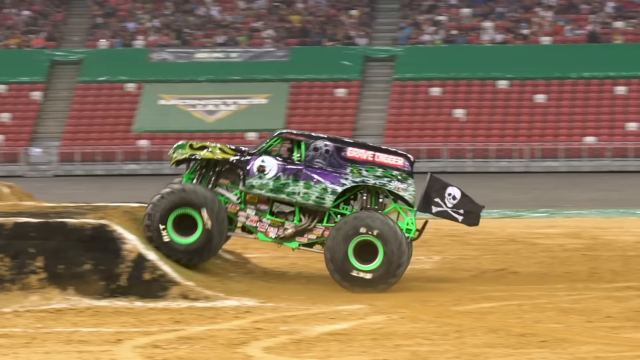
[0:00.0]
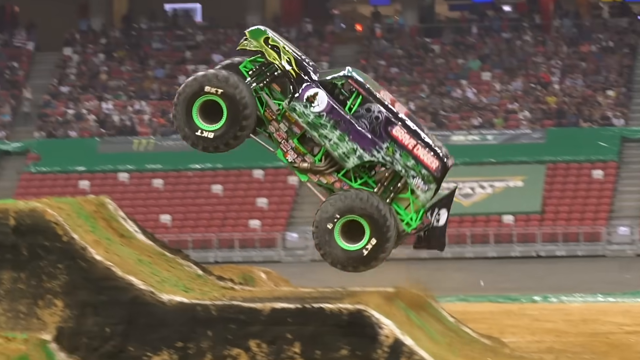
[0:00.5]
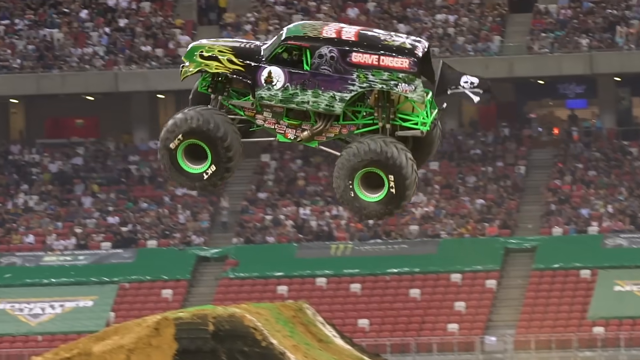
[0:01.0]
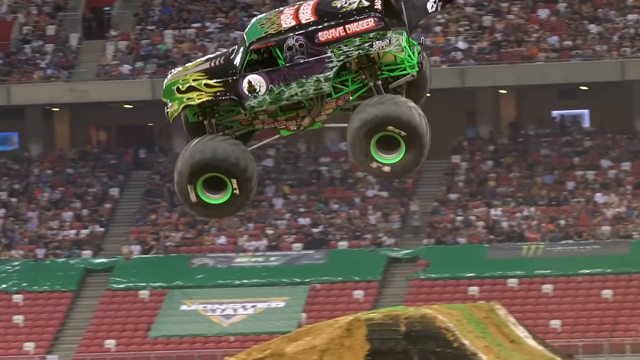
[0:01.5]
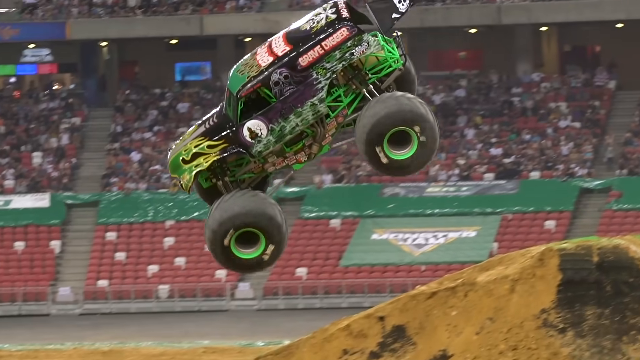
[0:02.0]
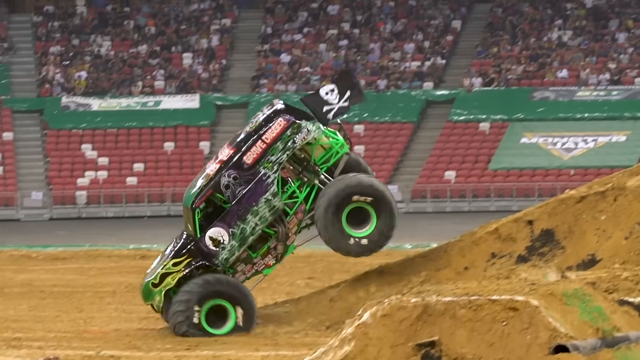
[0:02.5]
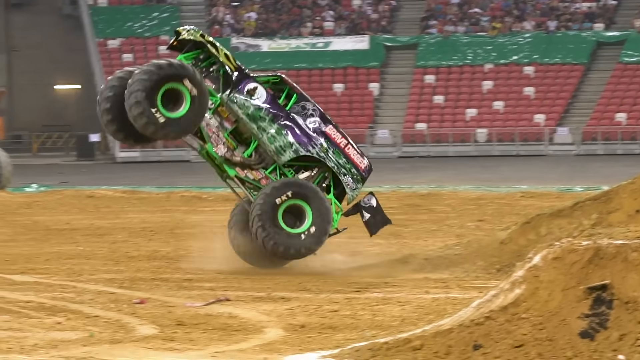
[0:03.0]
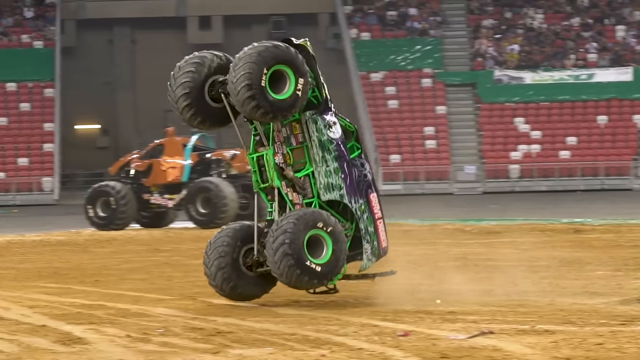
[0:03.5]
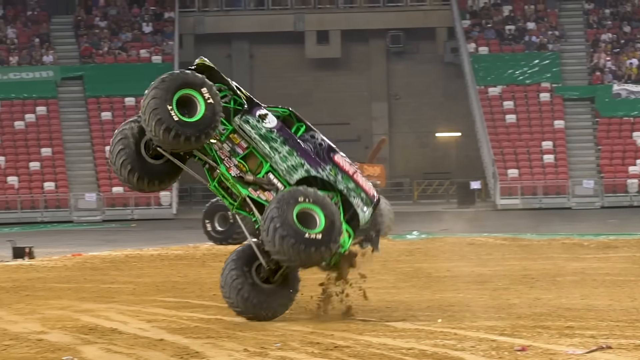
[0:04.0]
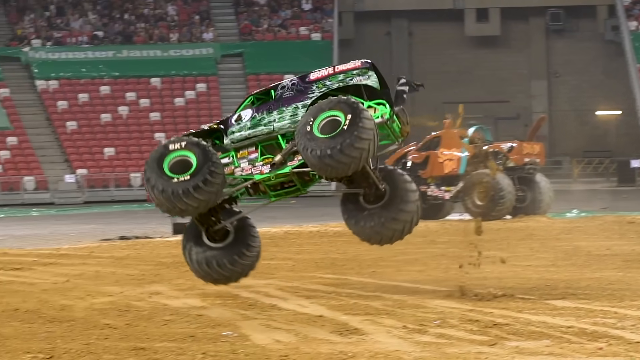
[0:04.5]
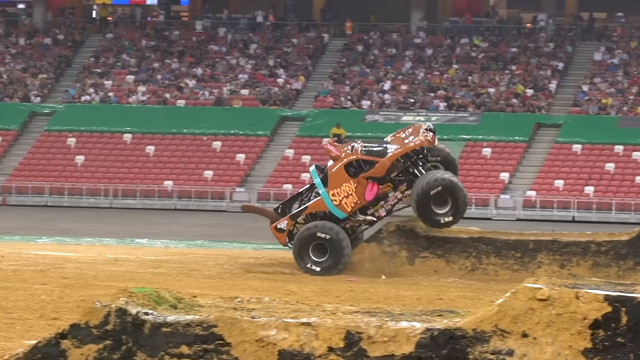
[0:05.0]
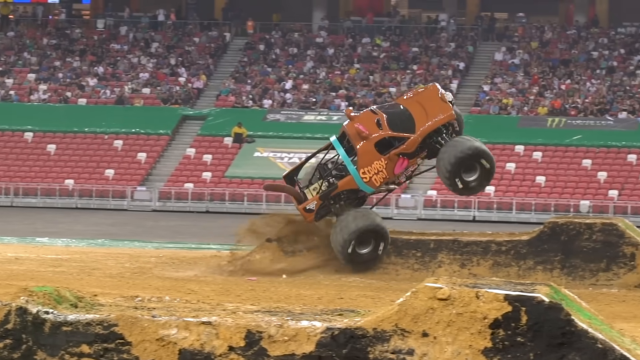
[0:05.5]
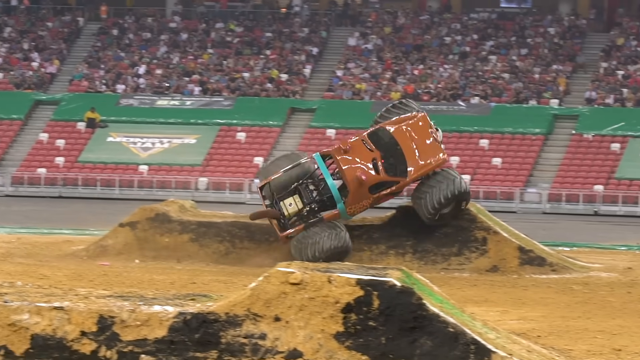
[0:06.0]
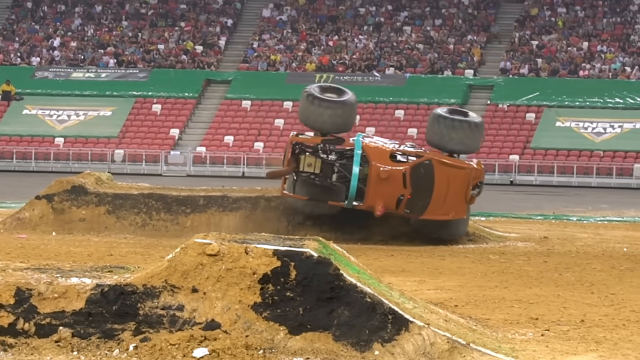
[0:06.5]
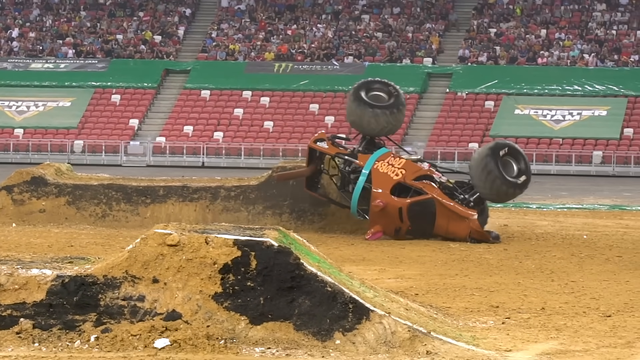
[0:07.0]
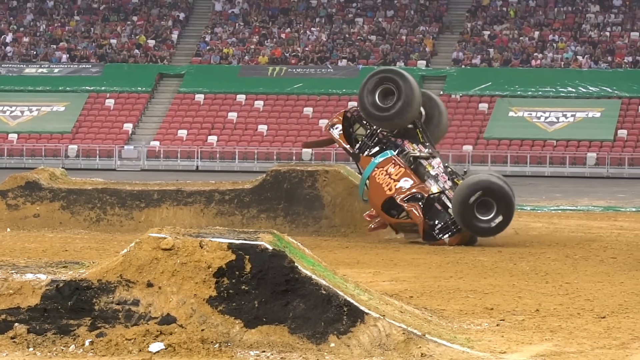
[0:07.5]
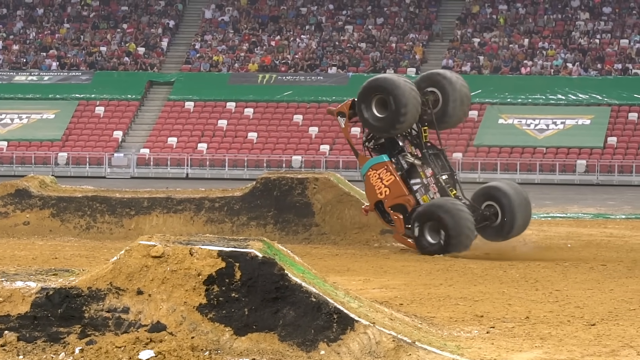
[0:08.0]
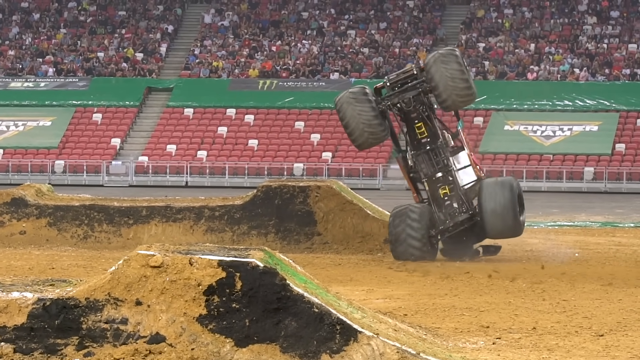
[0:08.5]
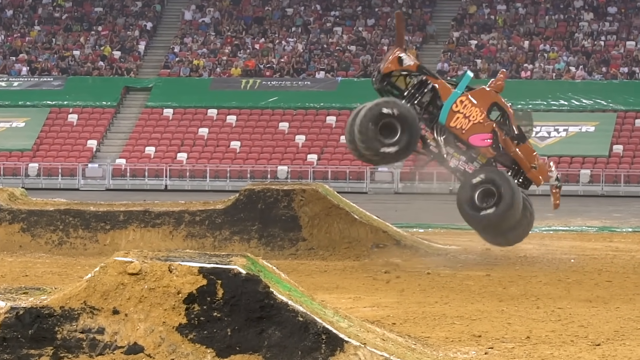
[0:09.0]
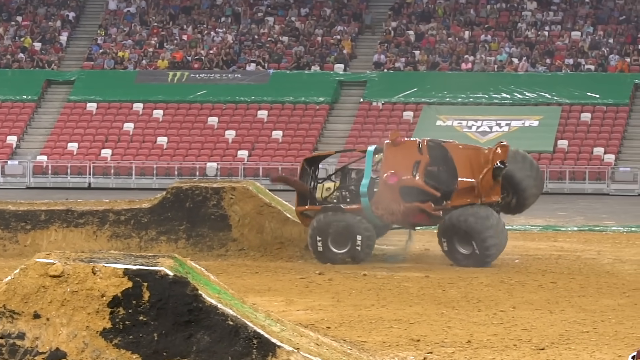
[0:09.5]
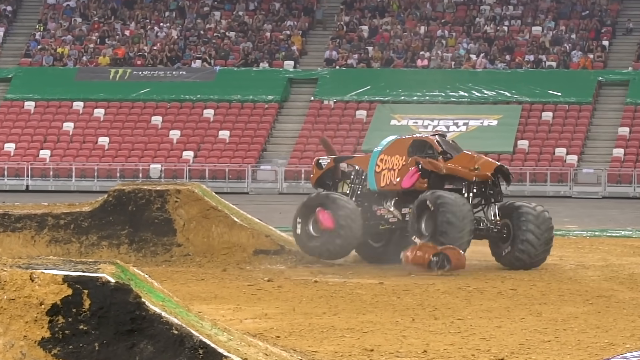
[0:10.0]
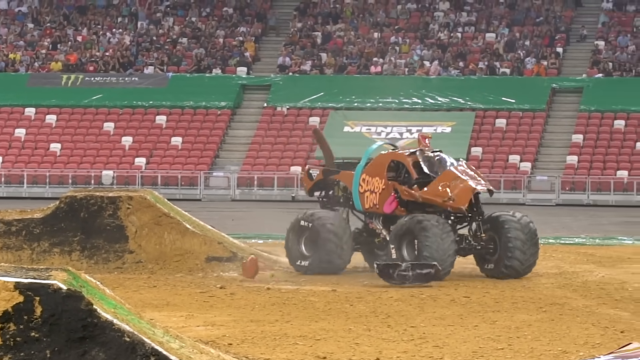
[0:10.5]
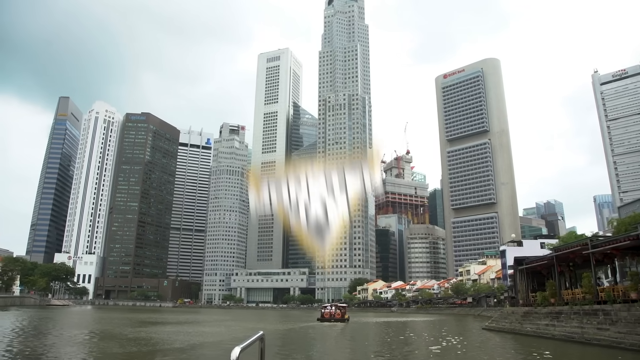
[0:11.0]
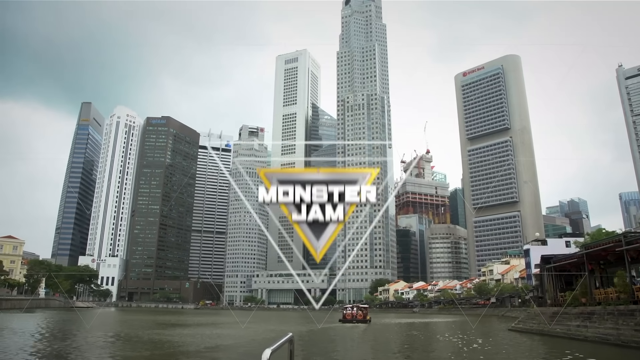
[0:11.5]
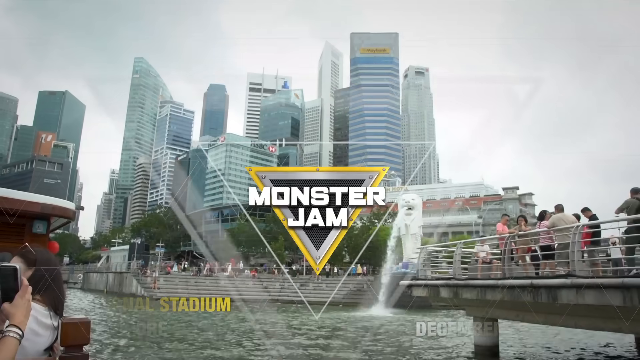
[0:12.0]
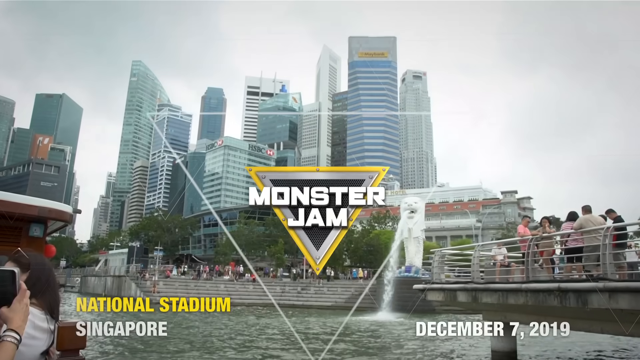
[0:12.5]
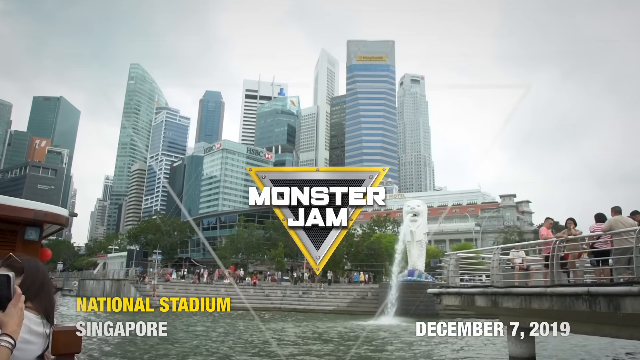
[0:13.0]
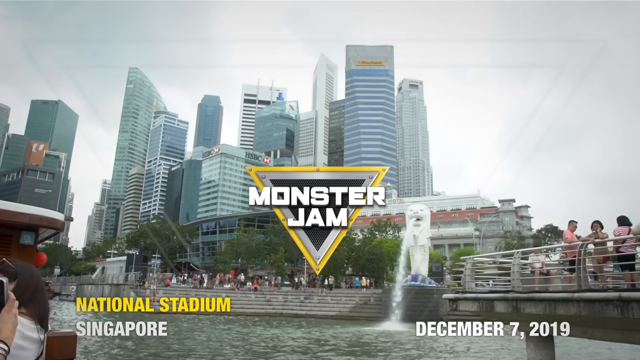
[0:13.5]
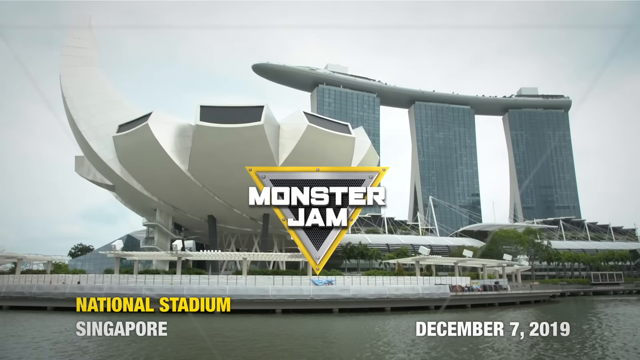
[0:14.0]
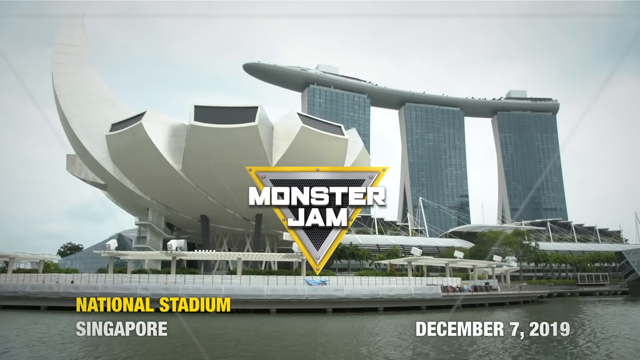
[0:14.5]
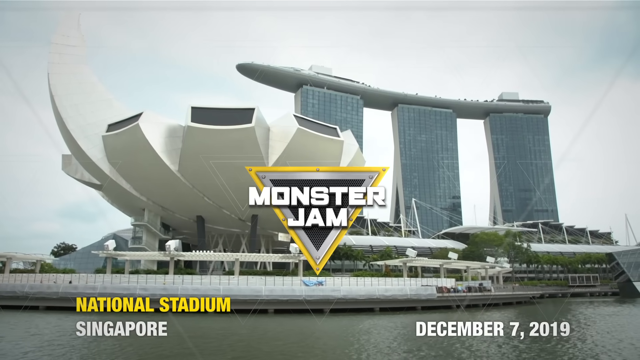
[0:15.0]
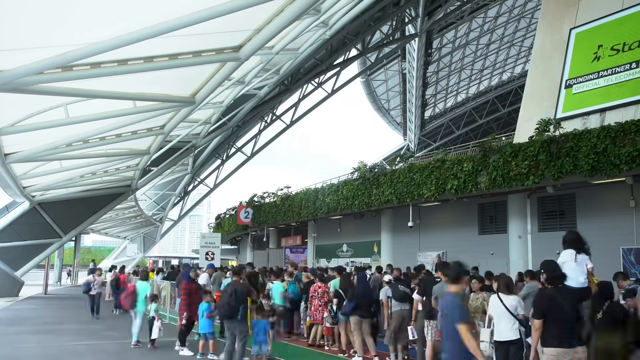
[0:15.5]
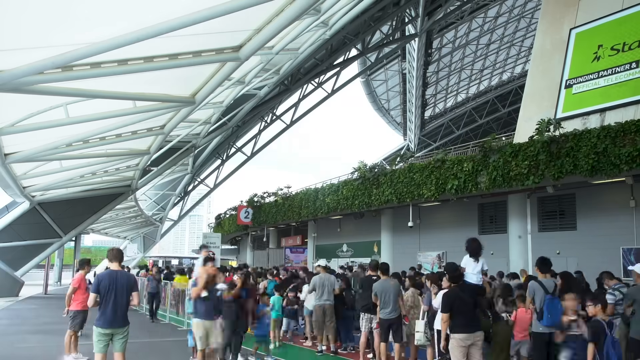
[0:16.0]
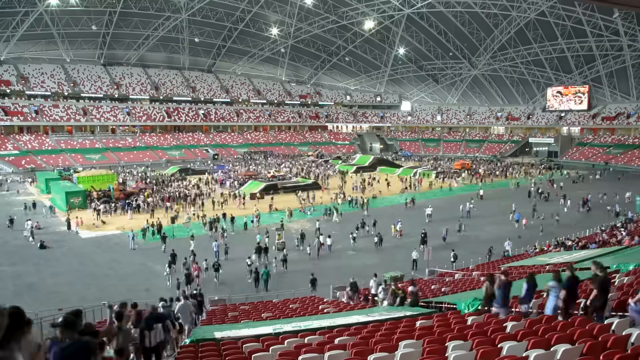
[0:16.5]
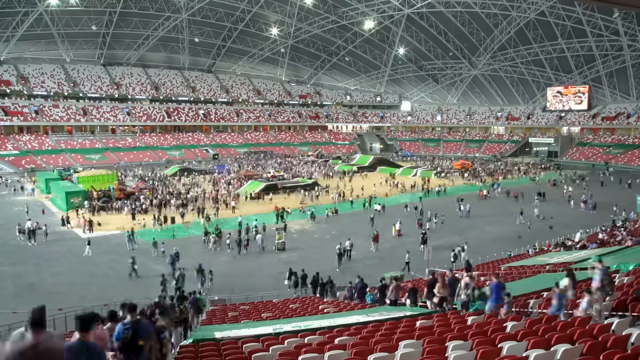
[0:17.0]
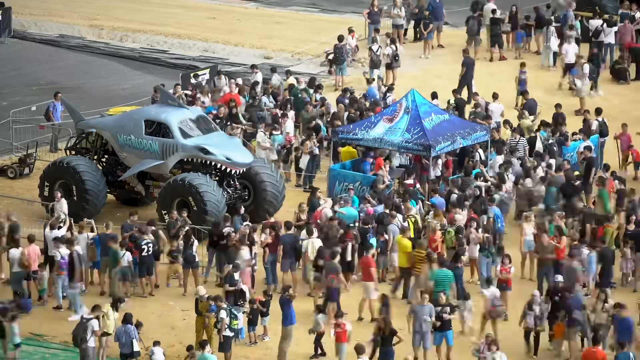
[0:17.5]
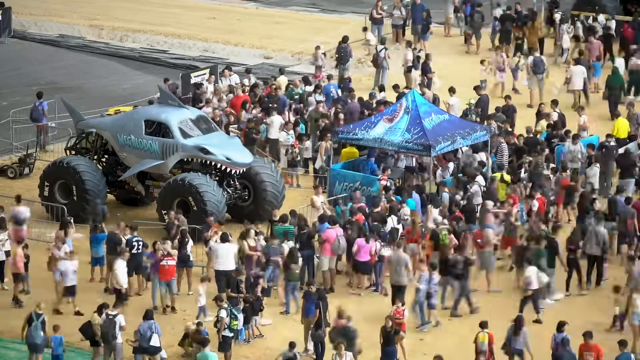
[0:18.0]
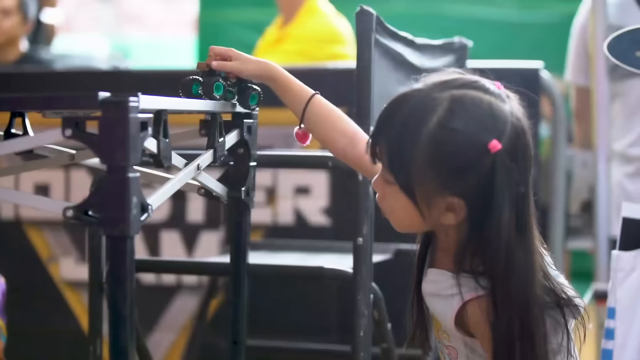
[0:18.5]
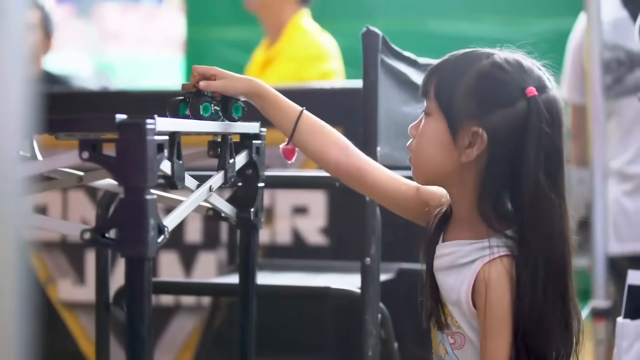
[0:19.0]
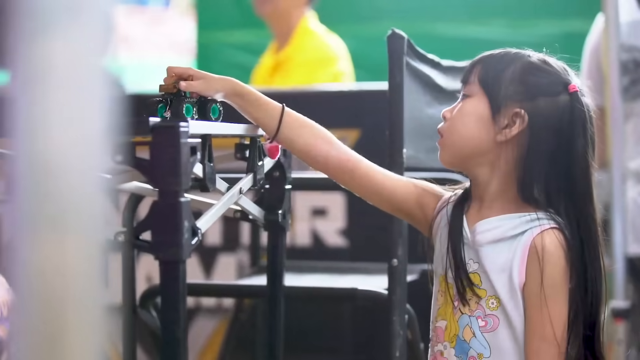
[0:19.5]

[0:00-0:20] This appears to be a game called a monster game, with different cars in it. Part of the video shows people walking very fast, apparently because it is sped up. There is a chocolate and green vehicle. The scene is bright, and the colours change as the action changes. The video moves from the game to buildings, then shows people walking, then a baby girl playing. The people move too fast to be counted.